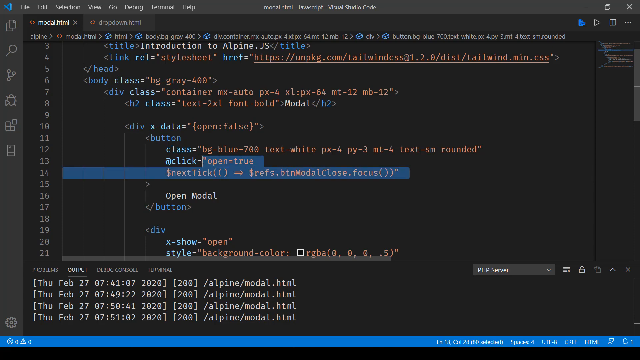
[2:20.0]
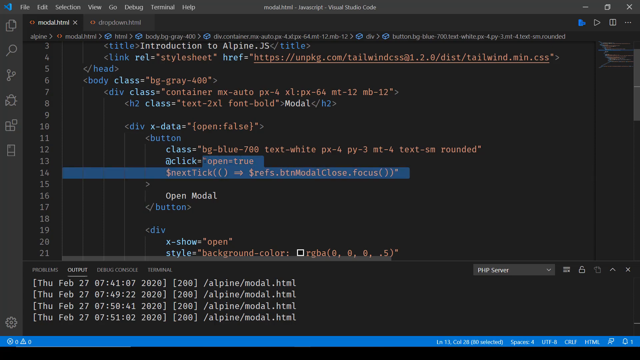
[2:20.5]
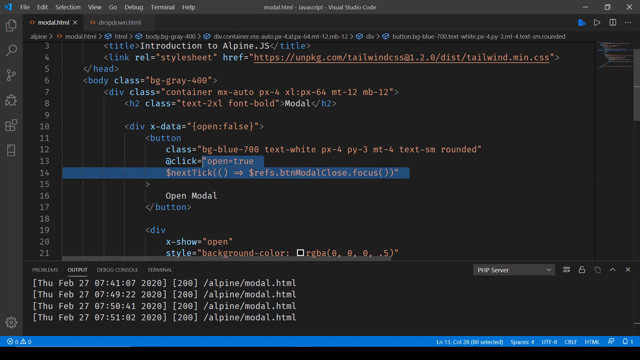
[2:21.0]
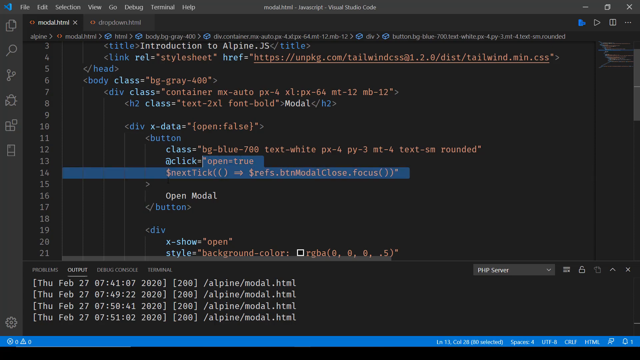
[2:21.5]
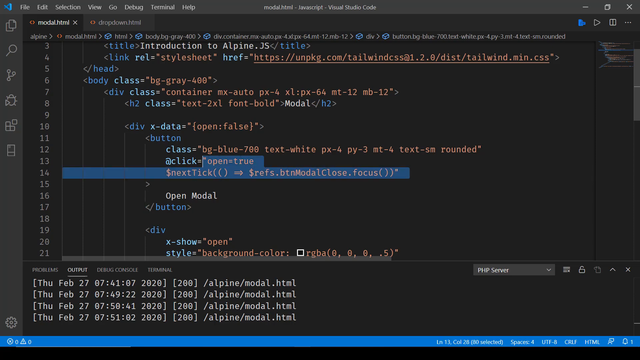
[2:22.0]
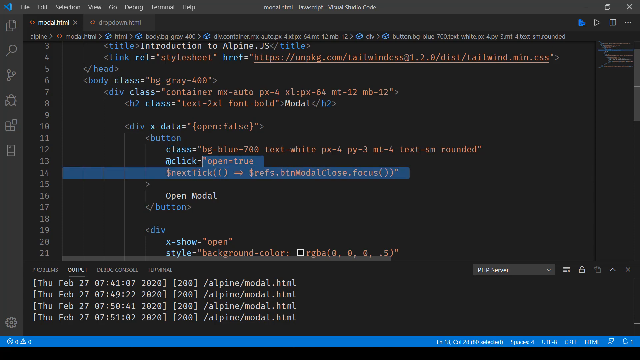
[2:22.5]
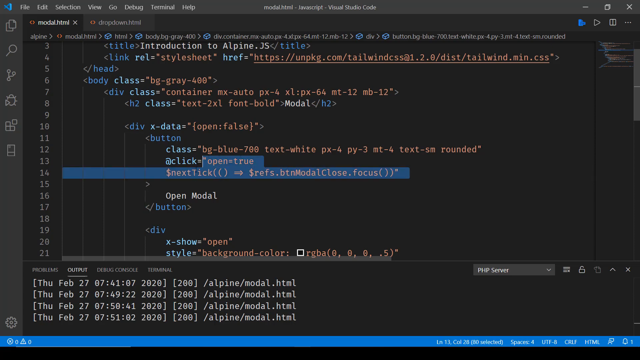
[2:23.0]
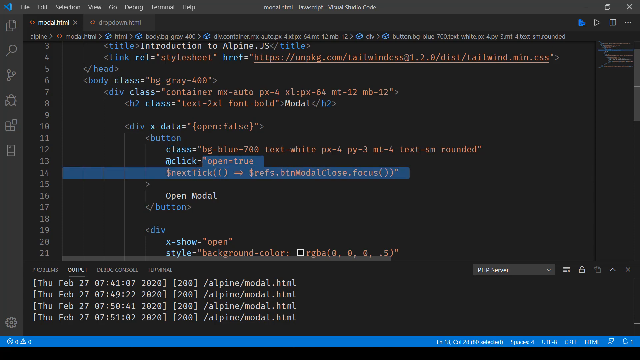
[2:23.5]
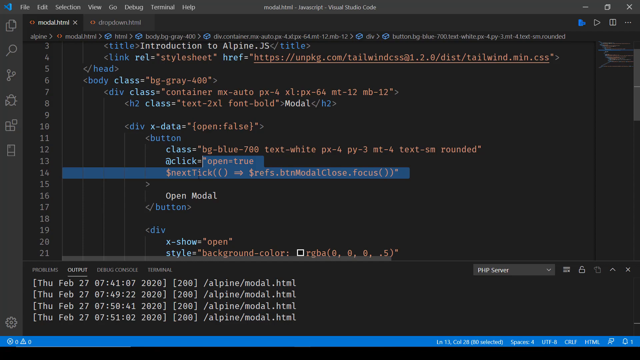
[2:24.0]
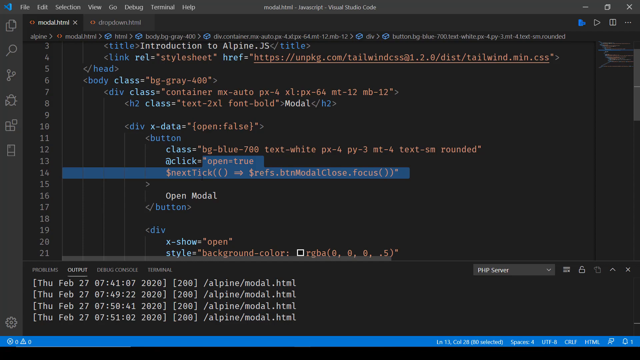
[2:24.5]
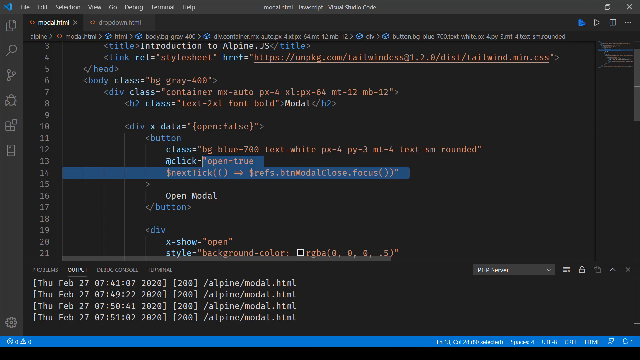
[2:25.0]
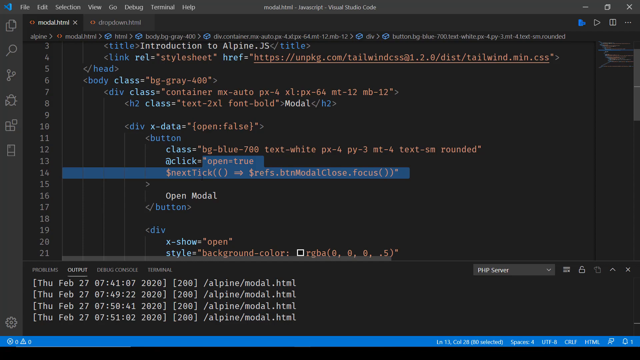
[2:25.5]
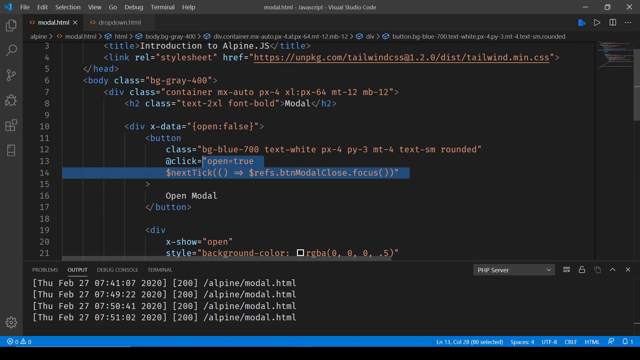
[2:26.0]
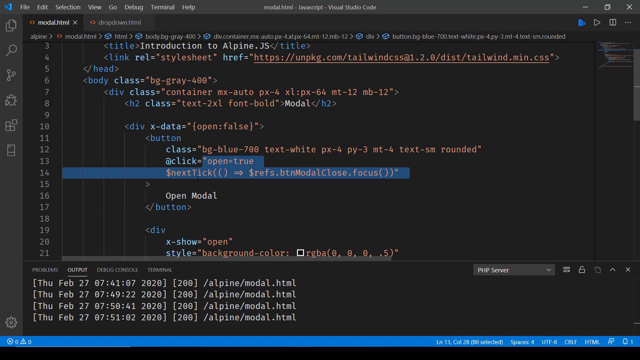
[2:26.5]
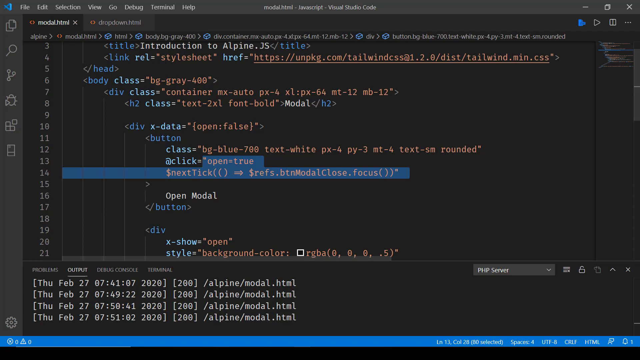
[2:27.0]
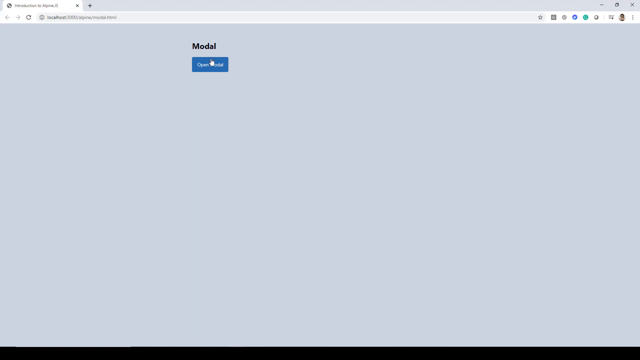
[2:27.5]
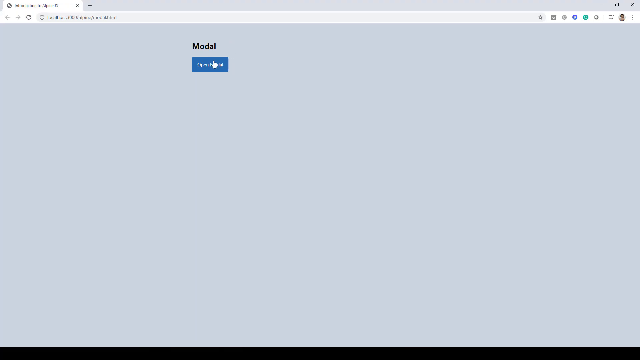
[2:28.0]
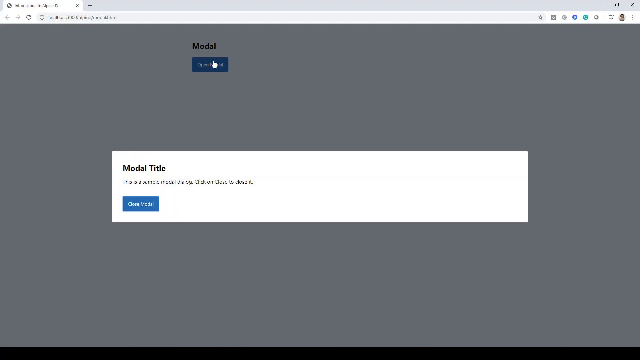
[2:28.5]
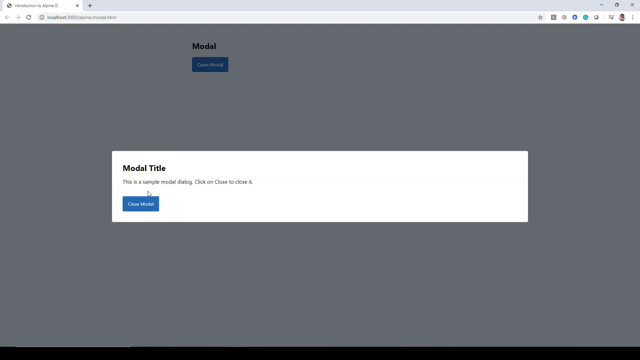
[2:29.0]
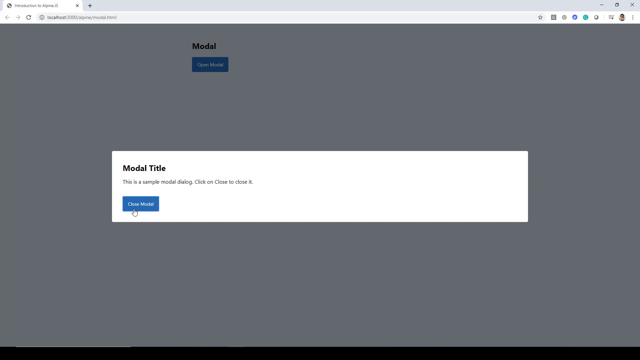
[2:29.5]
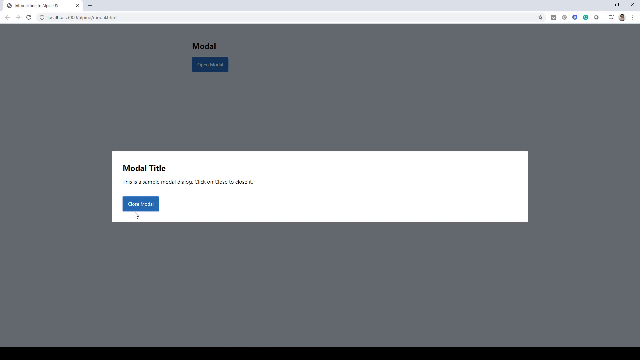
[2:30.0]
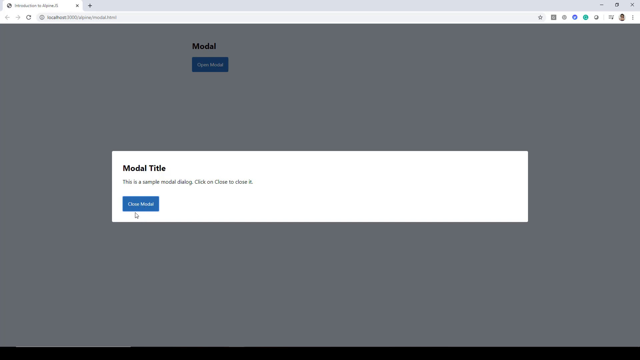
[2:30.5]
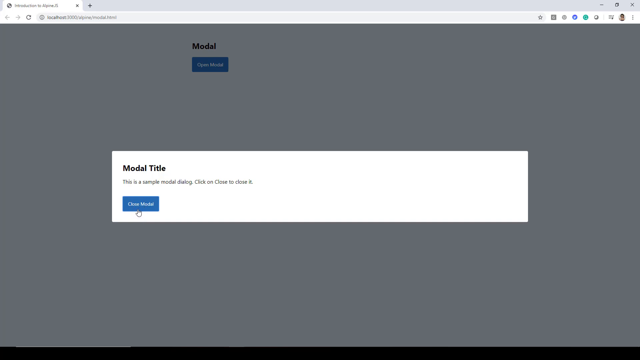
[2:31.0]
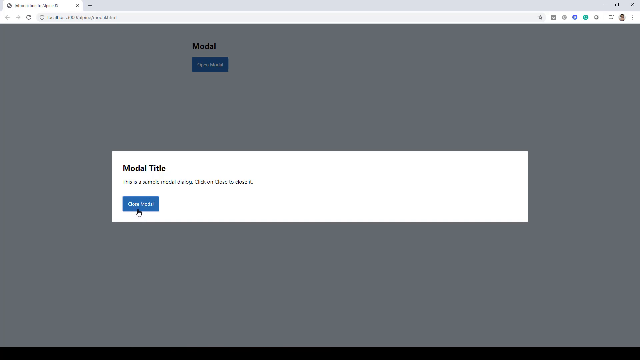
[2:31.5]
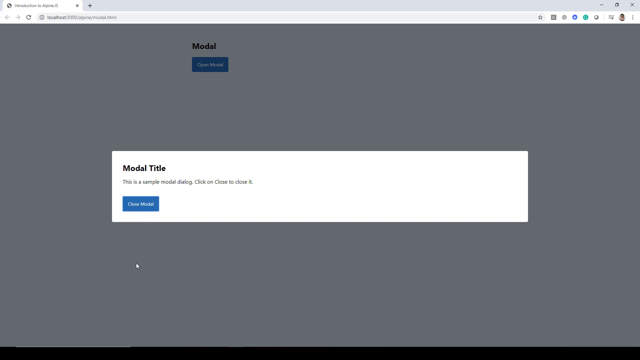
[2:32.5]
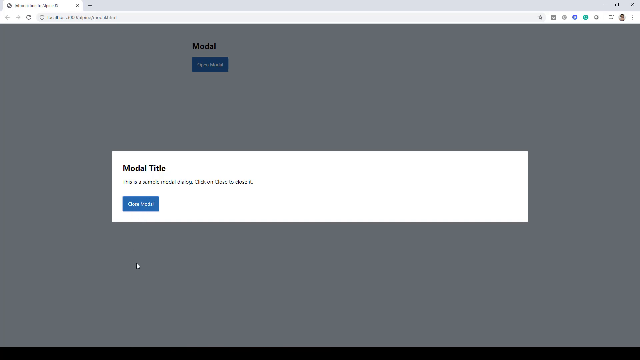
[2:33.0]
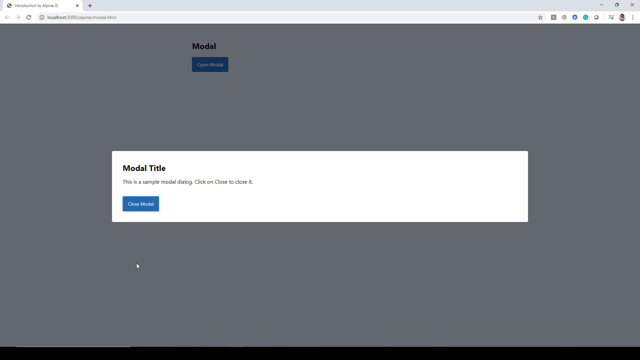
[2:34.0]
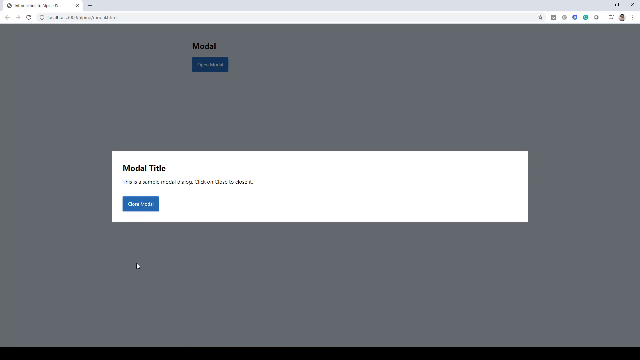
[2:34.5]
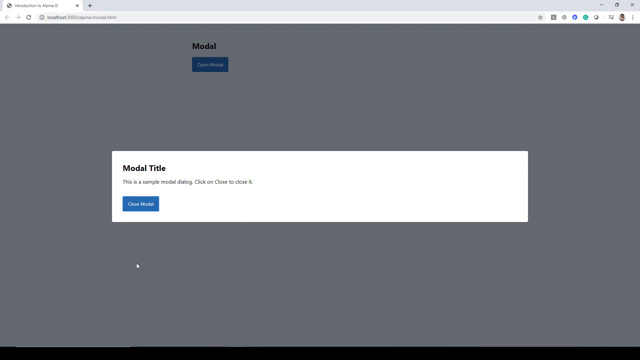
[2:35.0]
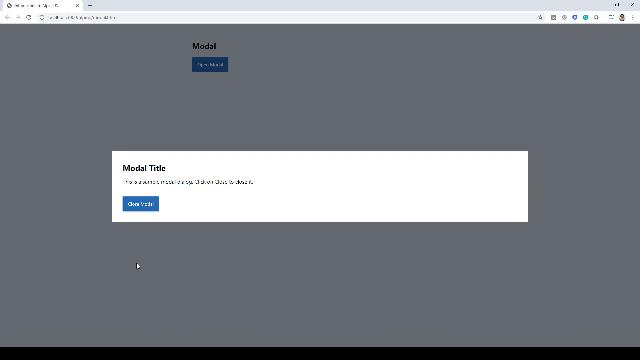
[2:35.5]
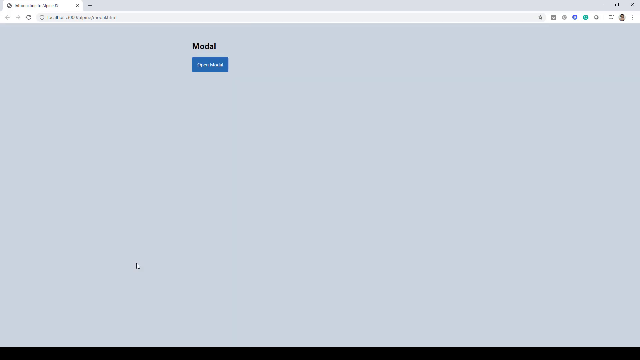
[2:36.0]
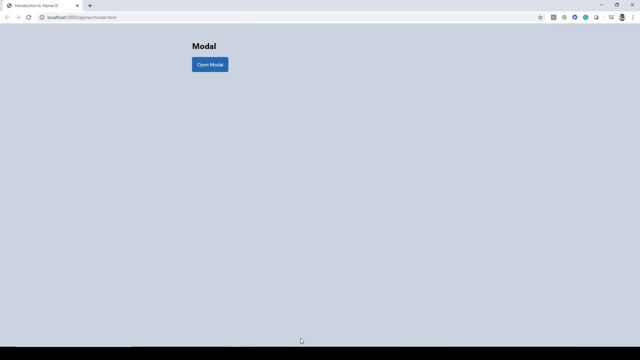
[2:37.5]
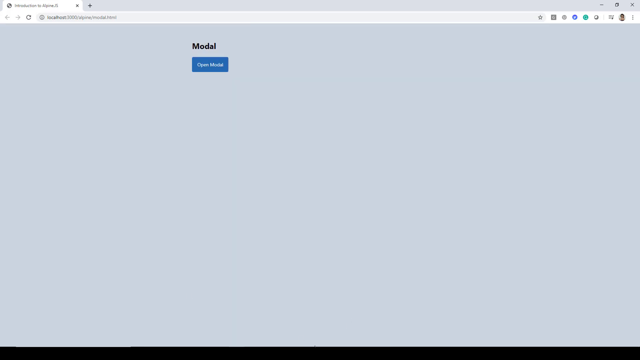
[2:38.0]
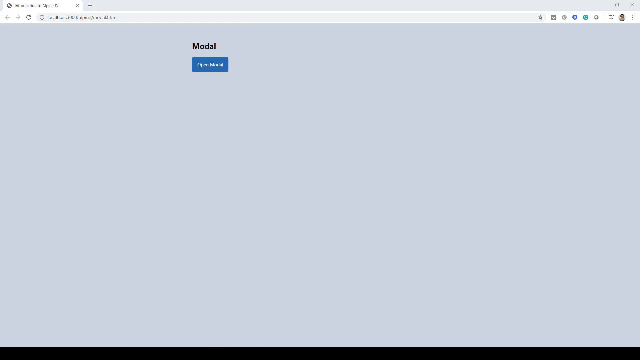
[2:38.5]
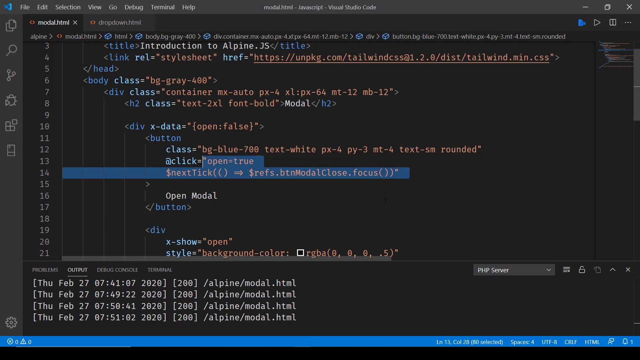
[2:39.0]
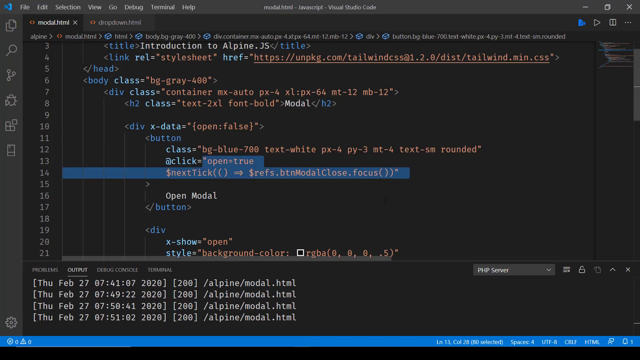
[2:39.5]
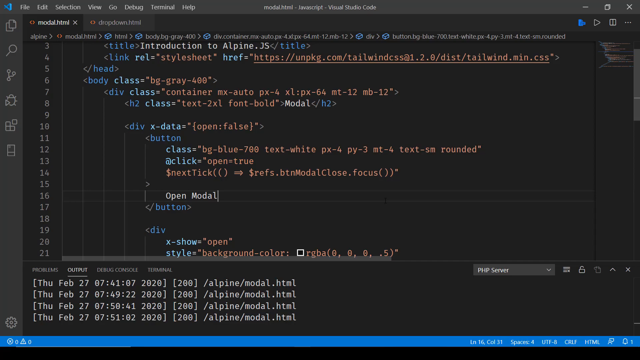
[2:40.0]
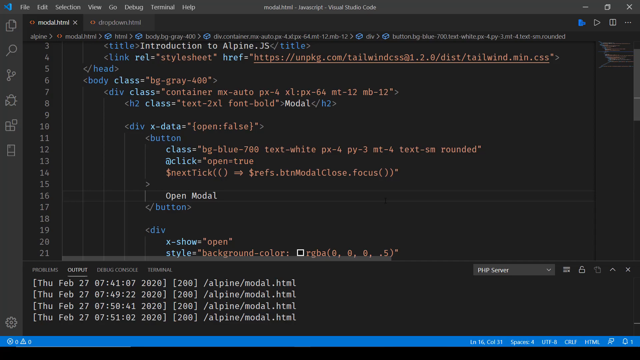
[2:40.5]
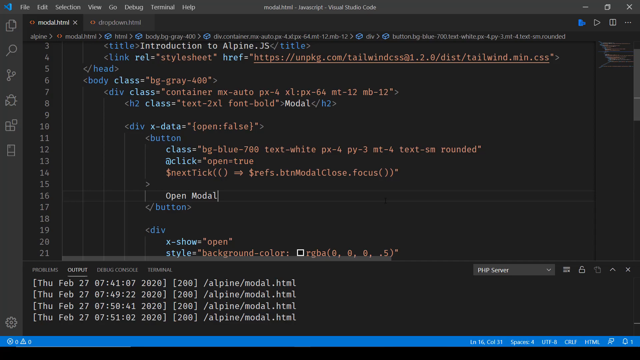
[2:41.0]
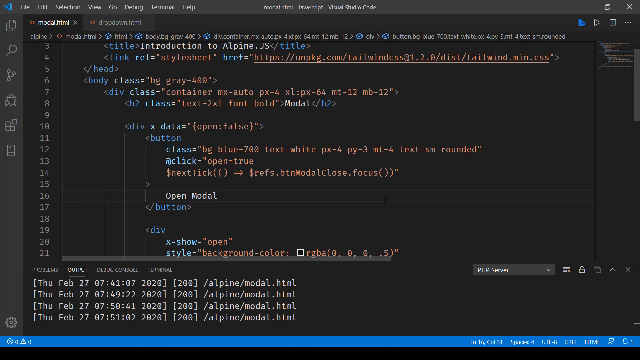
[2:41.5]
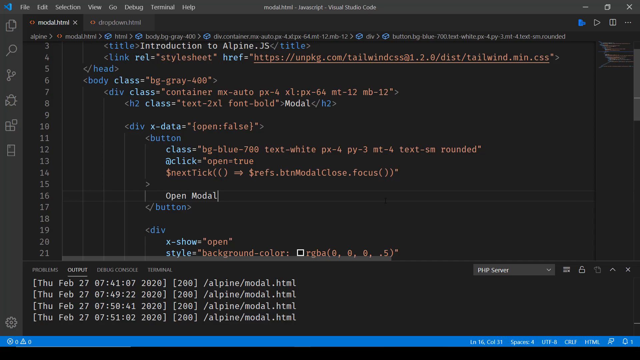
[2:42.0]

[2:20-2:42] The user finishes writing code in Visual Studio, then goes back to the same Chrome window with the same localhost and reopens the open modal. The open modal button seems to be the same color. The modal does close, though it is unclear whether the new code closed it or the user closed it themselves.